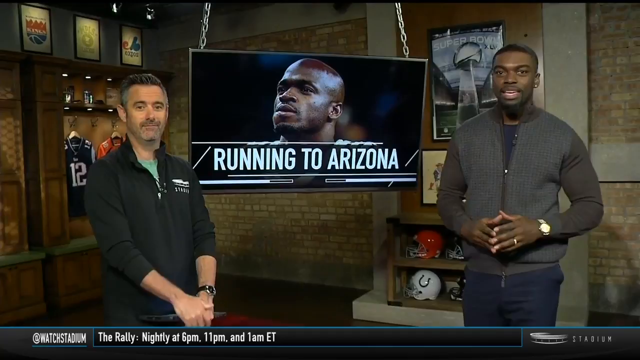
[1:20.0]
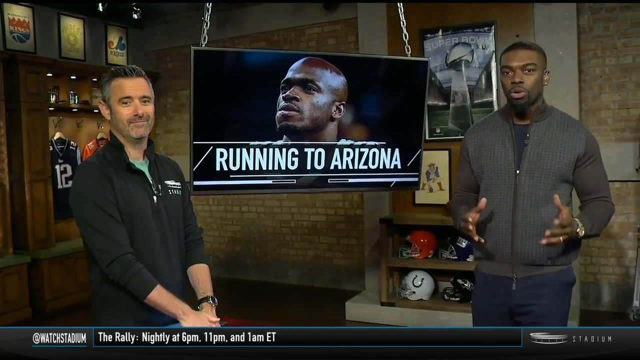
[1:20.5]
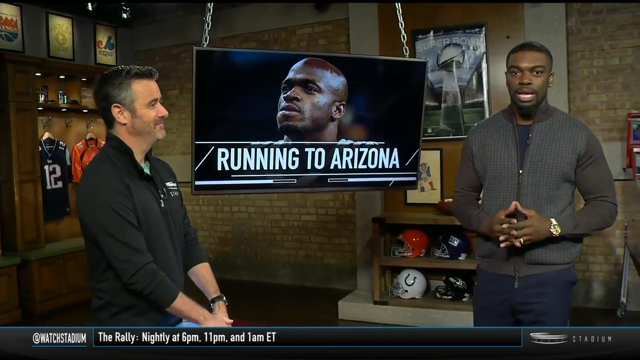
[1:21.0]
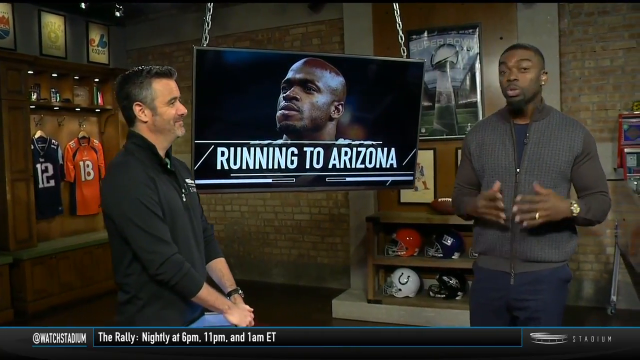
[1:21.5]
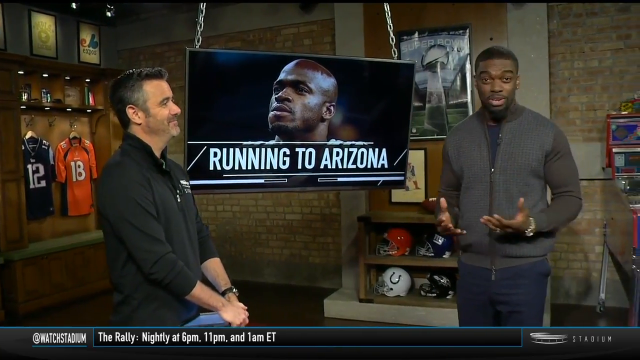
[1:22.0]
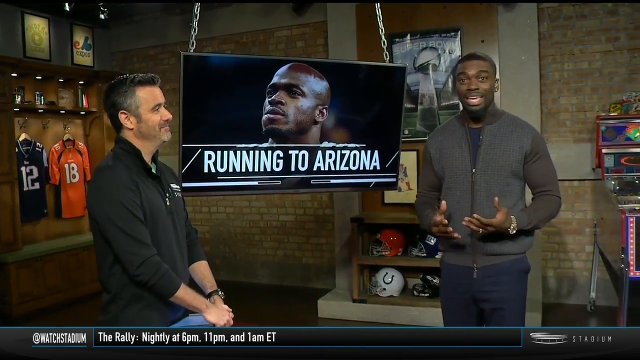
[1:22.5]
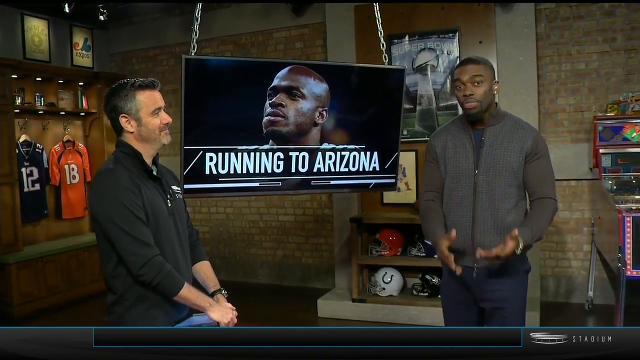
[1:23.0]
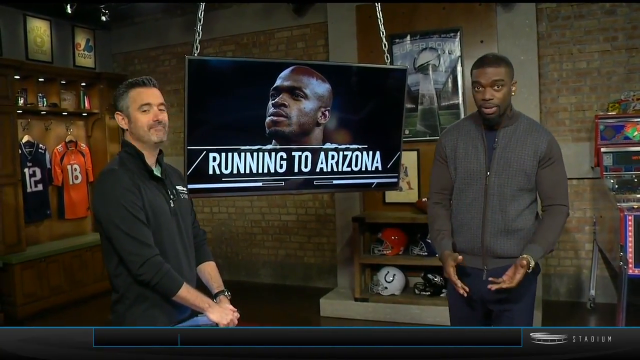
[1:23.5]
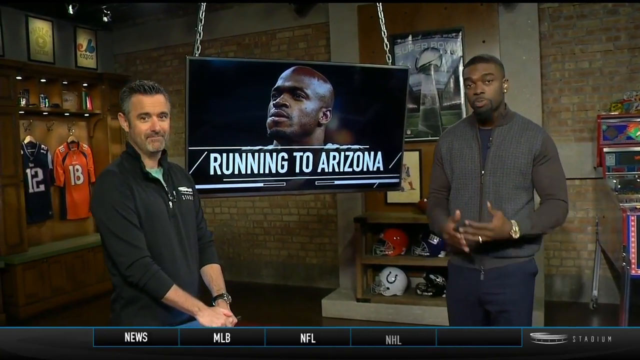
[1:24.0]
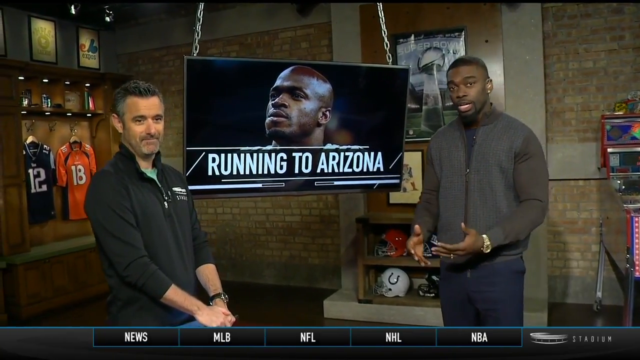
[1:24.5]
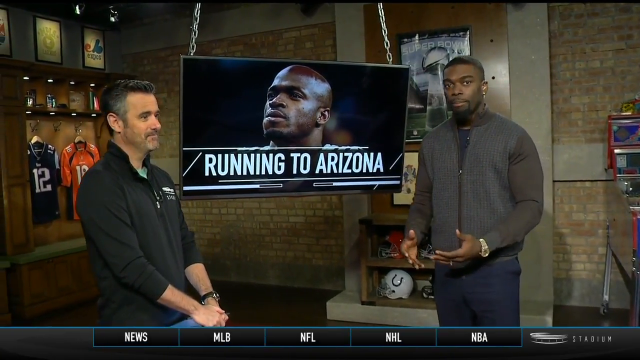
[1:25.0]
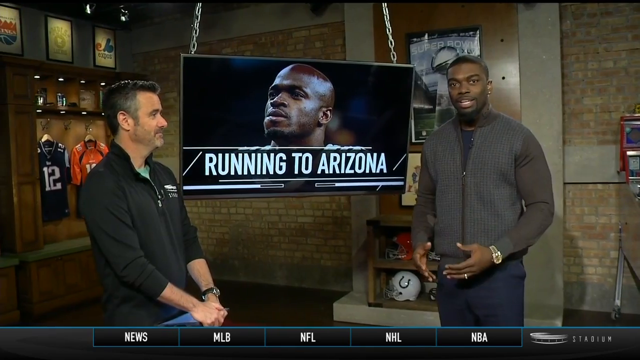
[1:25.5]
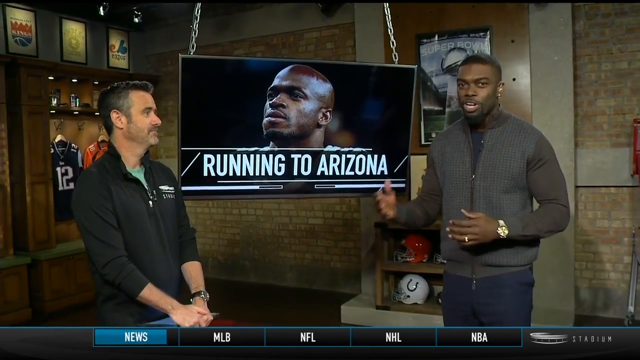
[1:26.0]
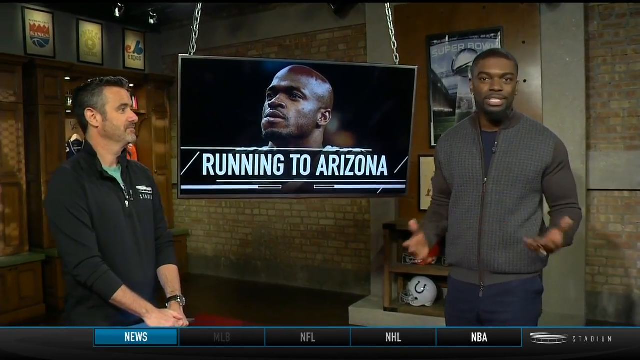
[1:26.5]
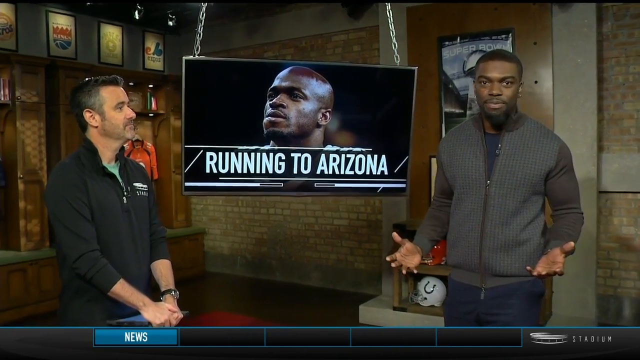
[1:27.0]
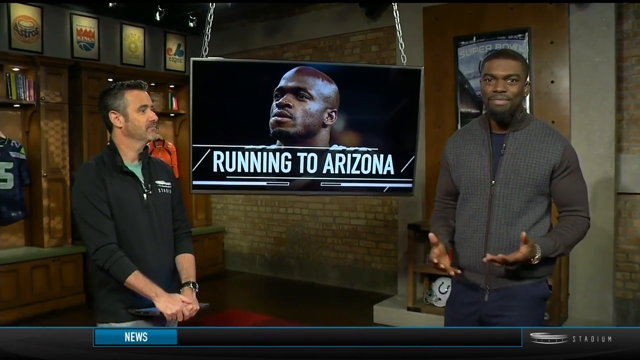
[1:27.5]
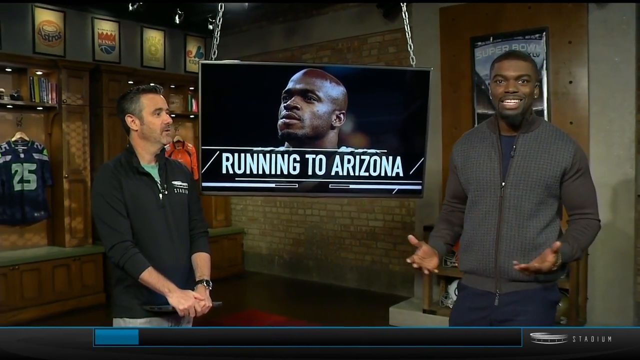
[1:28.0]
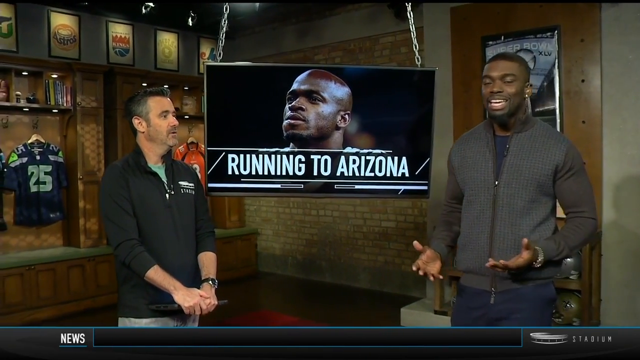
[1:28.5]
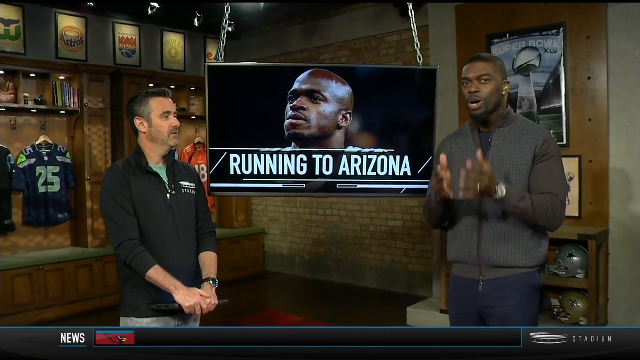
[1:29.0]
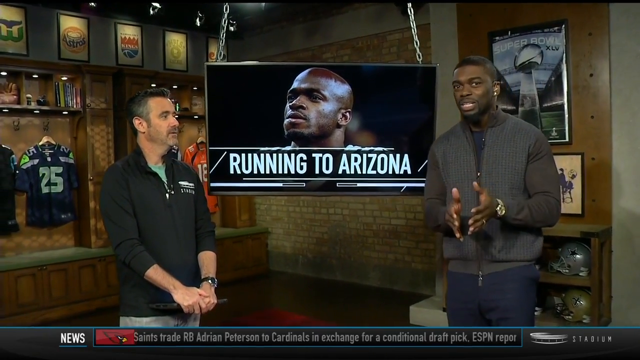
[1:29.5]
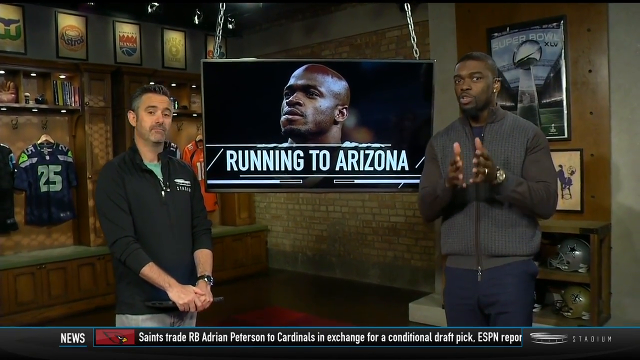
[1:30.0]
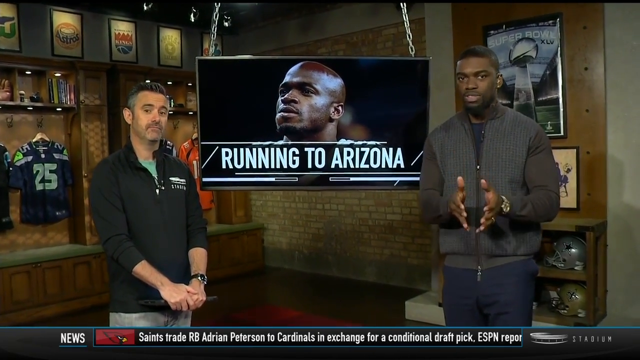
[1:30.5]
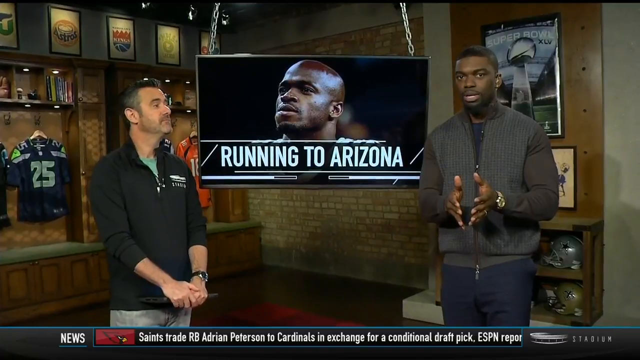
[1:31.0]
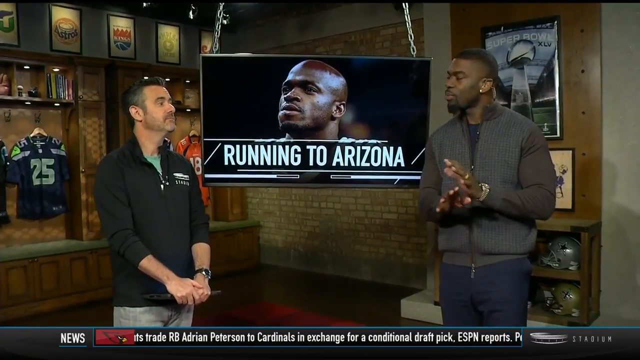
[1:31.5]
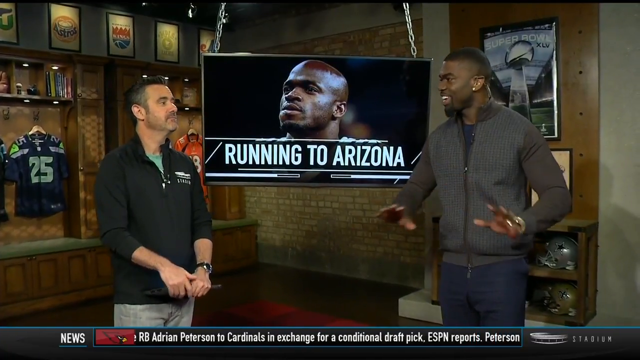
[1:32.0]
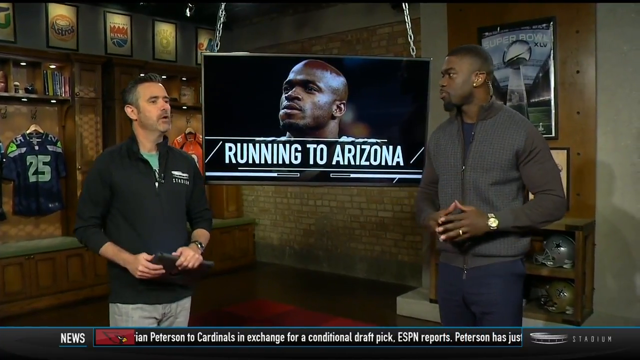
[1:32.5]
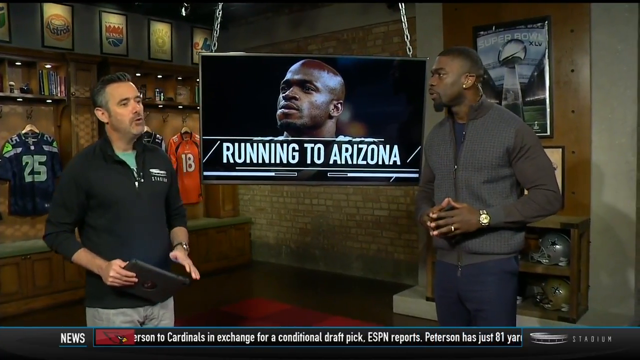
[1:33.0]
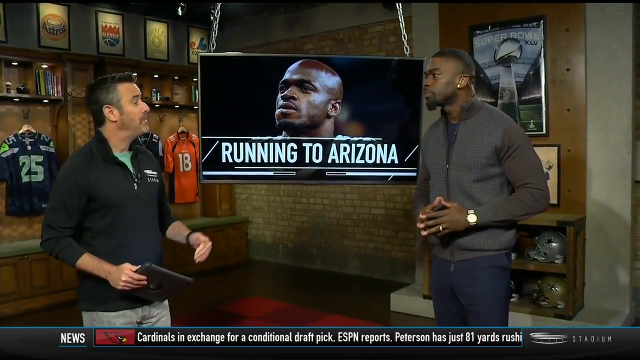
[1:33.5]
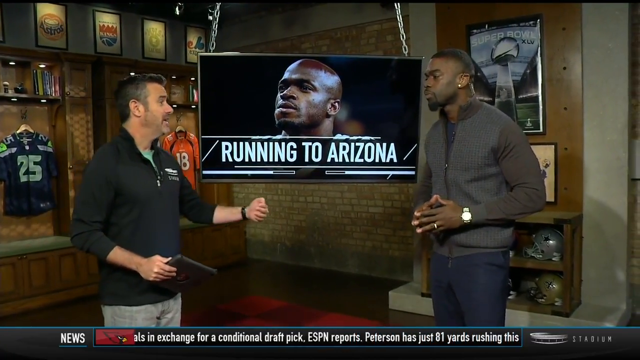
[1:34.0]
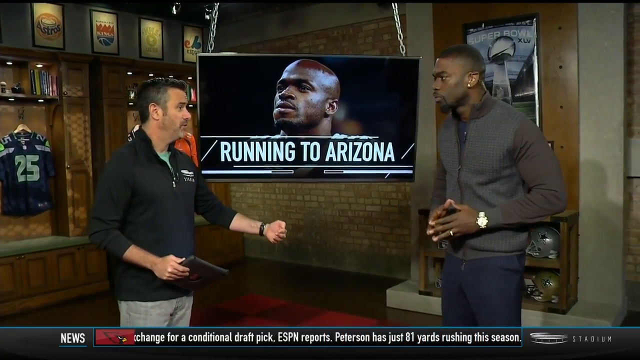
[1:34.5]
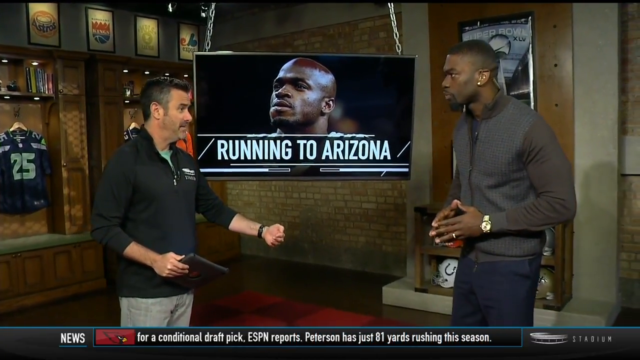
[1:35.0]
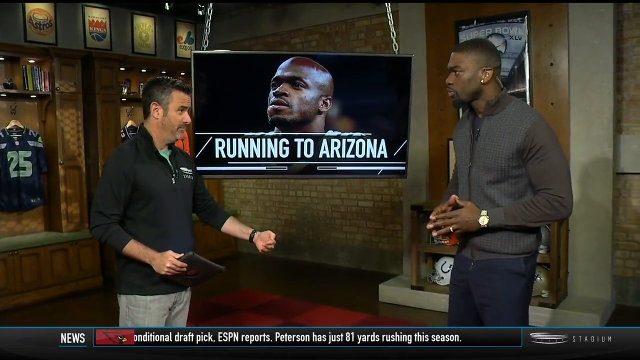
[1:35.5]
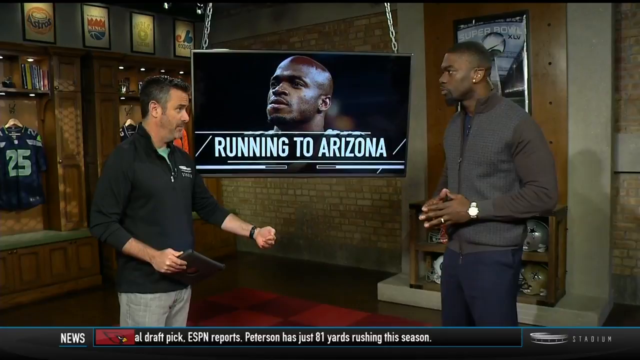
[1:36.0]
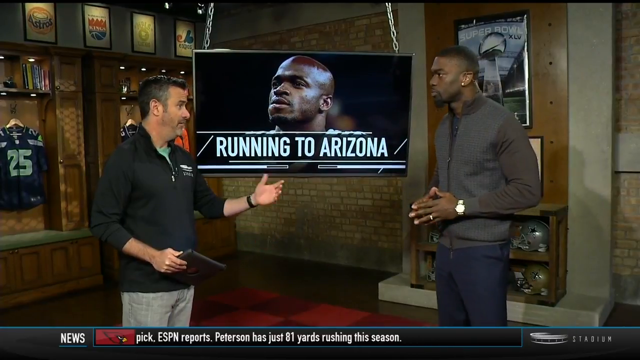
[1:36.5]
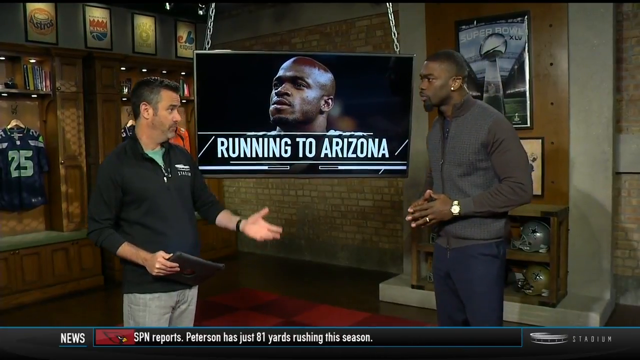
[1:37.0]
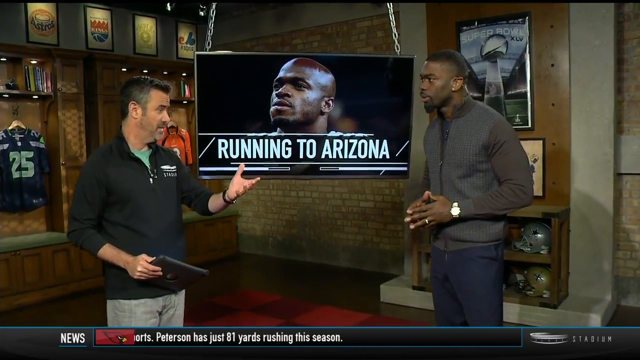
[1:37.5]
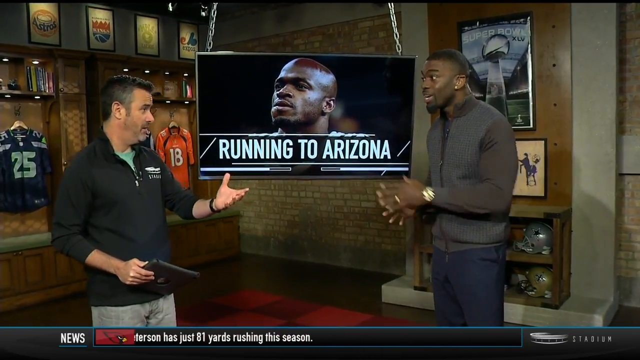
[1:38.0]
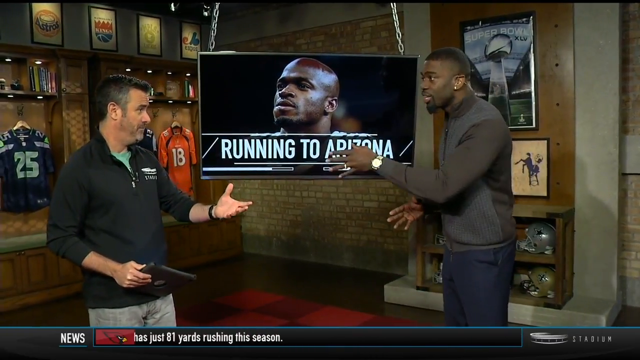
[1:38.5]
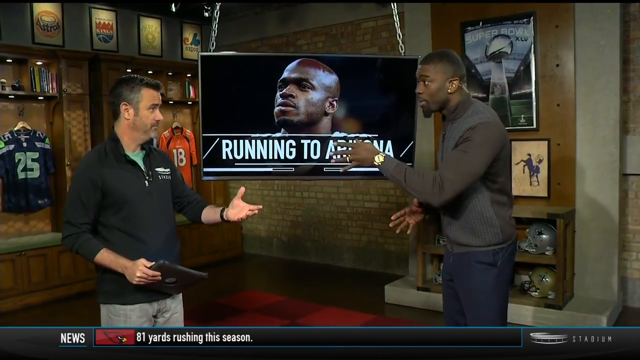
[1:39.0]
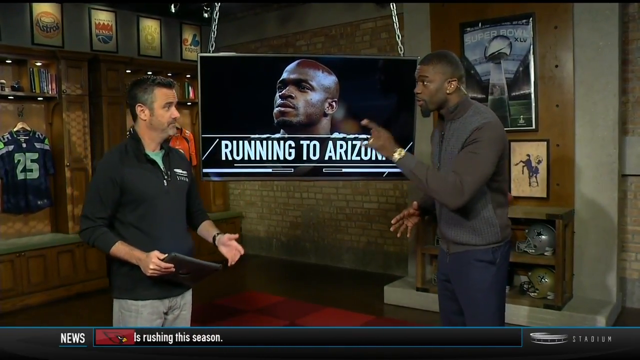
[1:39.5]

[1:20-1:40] The sports talk show continues. The man on the right faces the camera, gesturing with his hands as he talks, while the man on the left mostly watches him, occasionally talks, and extends his left hand to gesture as they talk back and forth. The room is darker, with tan and brown brick on the wall and some lighting coming up behind the jerseys and framed pictures. There is a lot of wood and tan color in the background and trim, giving a cozy feel like someone's home, and sports paraphernalia is all over the walls. The two face each other. When the man on the right is not talking, he holds his fingers touching in front of him; he wears a gold watch on his left hand. The man on the left wears a black watch on his left hand. At the start, the man on the left appears to be holding some kind of black computer tablet or book with both hands as he watches the other man speak.